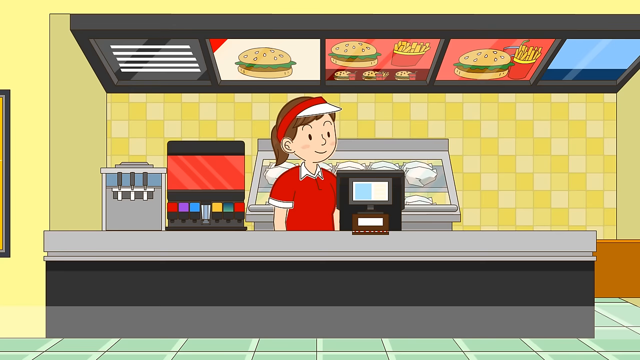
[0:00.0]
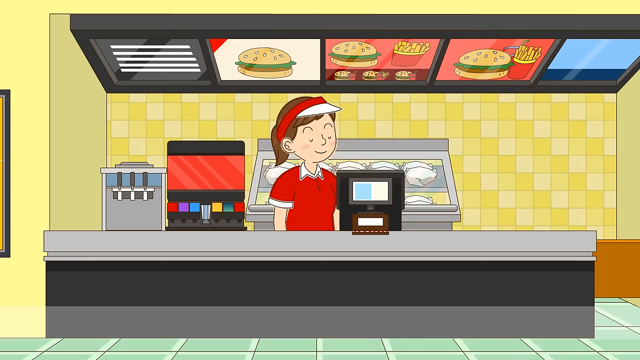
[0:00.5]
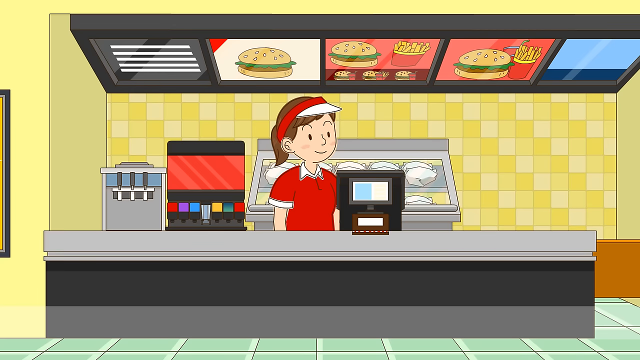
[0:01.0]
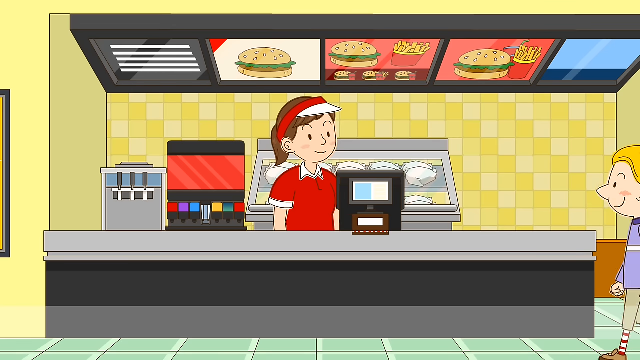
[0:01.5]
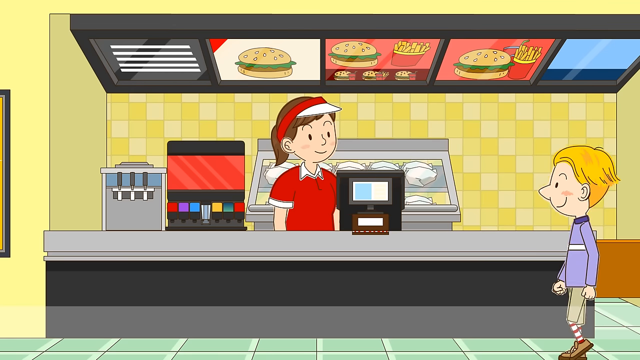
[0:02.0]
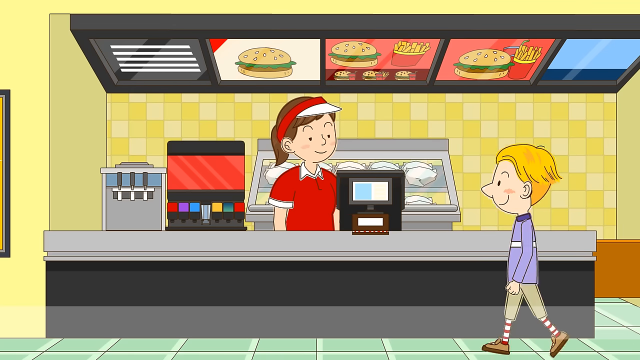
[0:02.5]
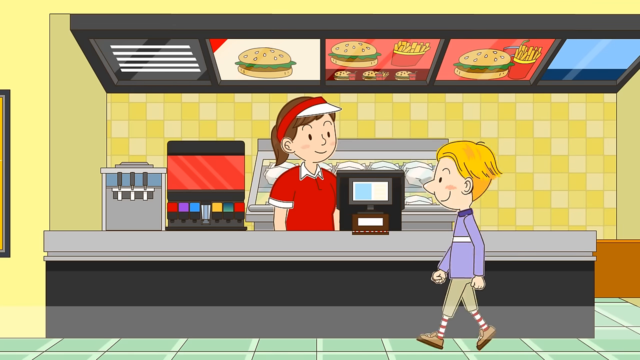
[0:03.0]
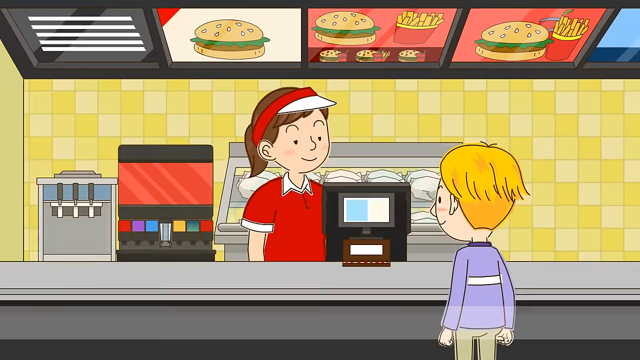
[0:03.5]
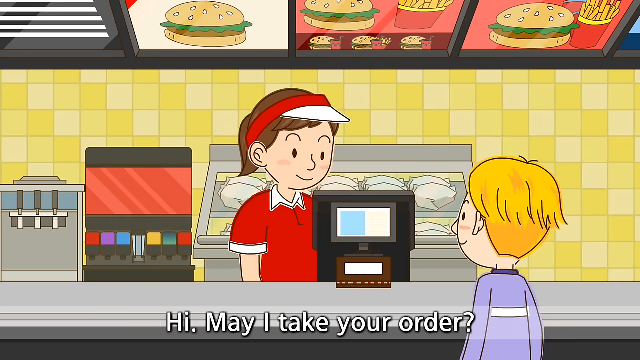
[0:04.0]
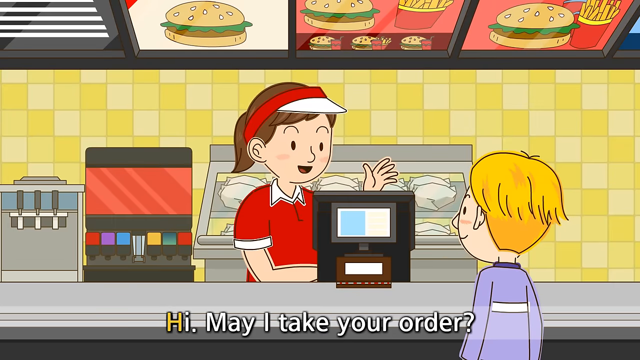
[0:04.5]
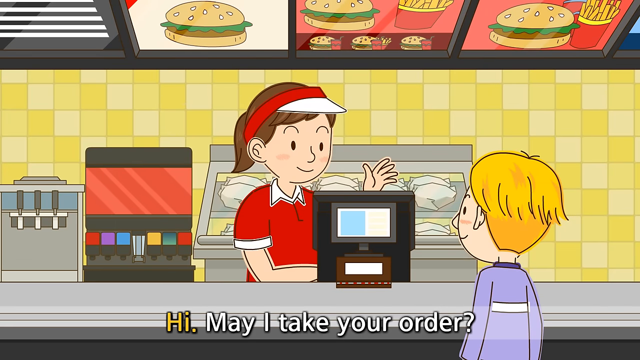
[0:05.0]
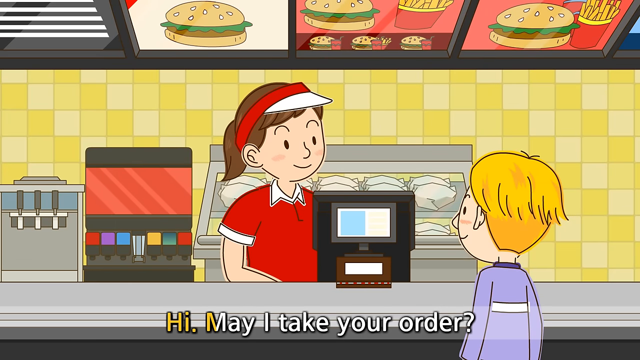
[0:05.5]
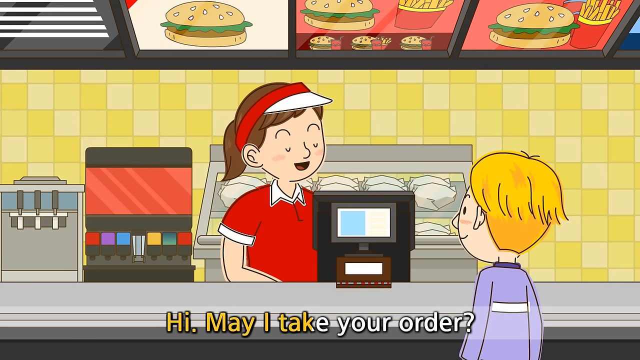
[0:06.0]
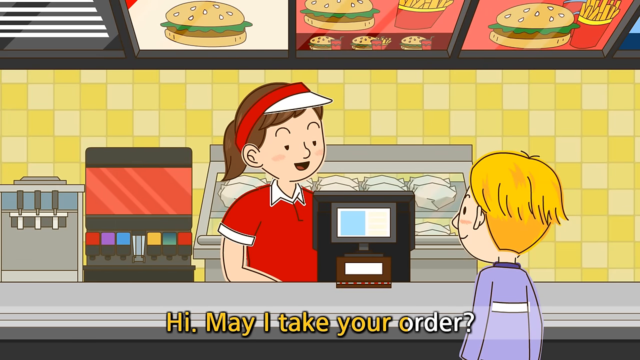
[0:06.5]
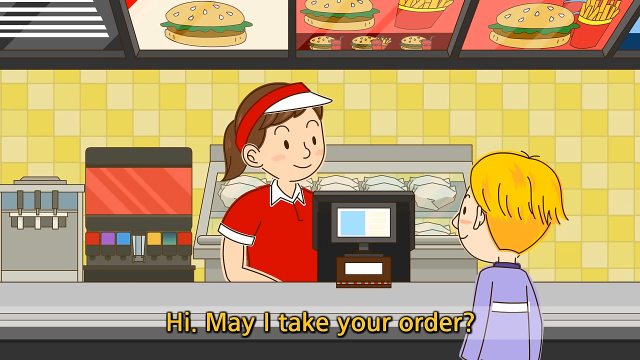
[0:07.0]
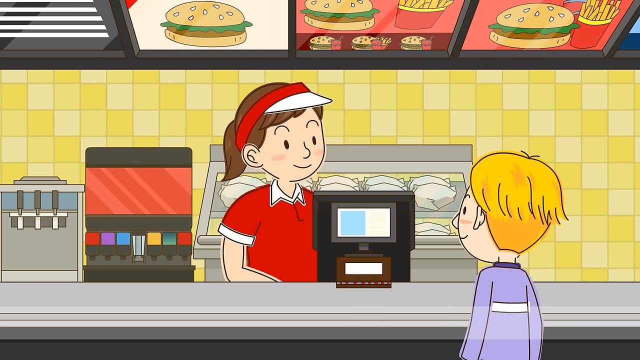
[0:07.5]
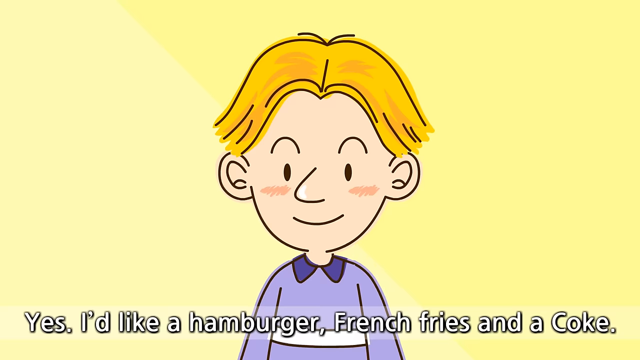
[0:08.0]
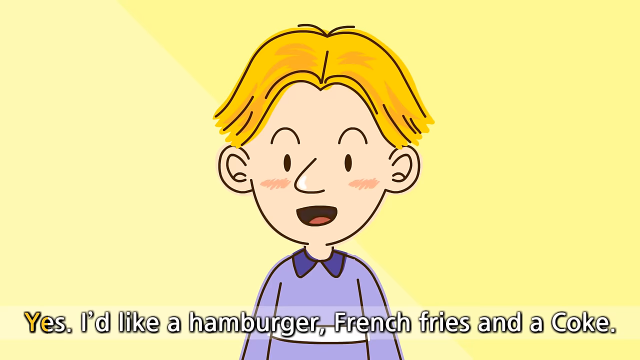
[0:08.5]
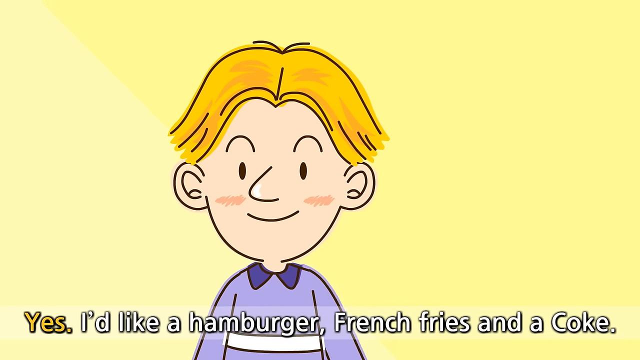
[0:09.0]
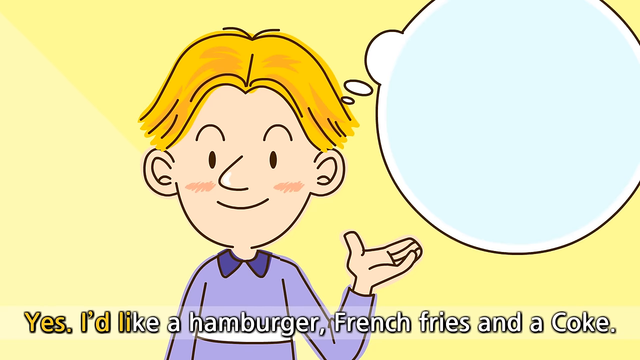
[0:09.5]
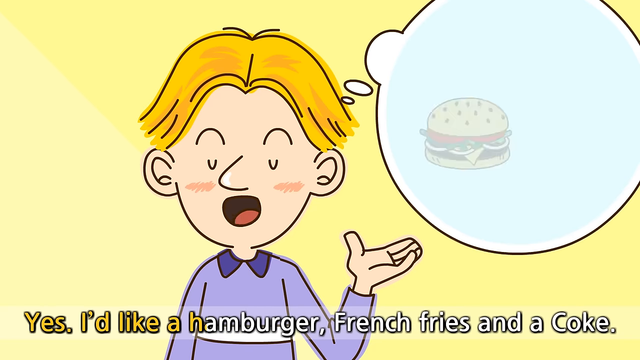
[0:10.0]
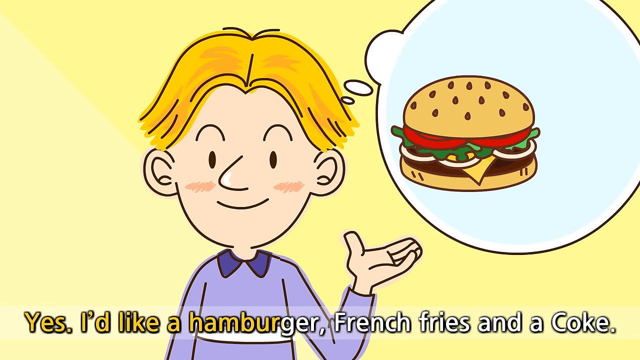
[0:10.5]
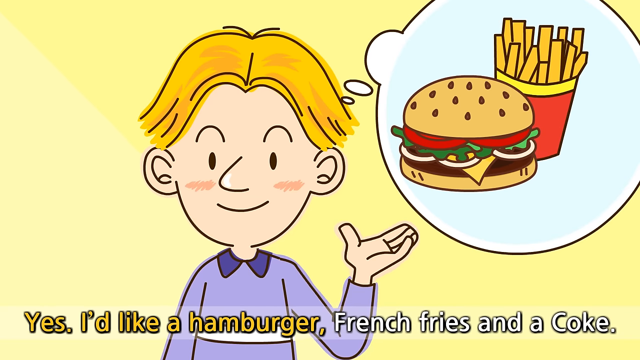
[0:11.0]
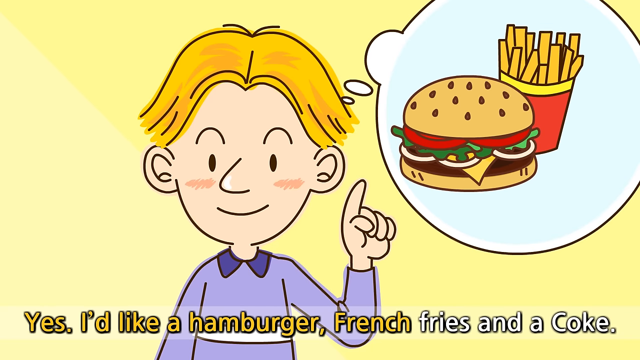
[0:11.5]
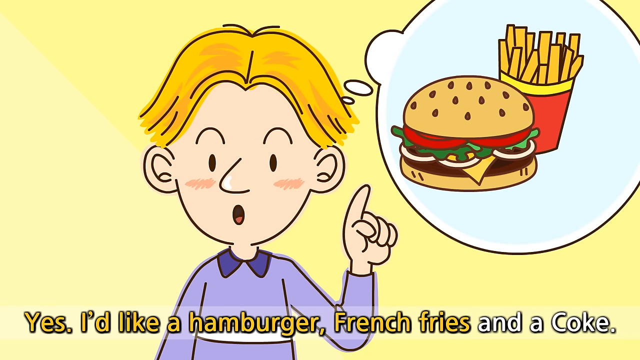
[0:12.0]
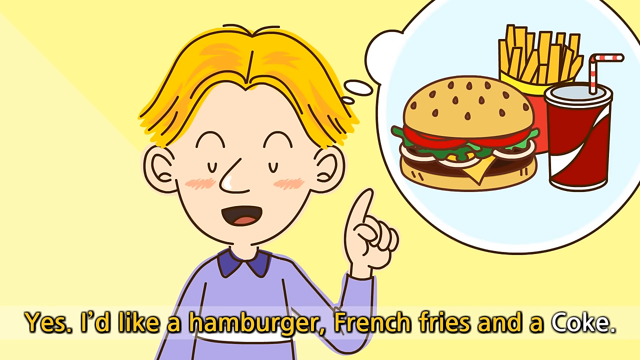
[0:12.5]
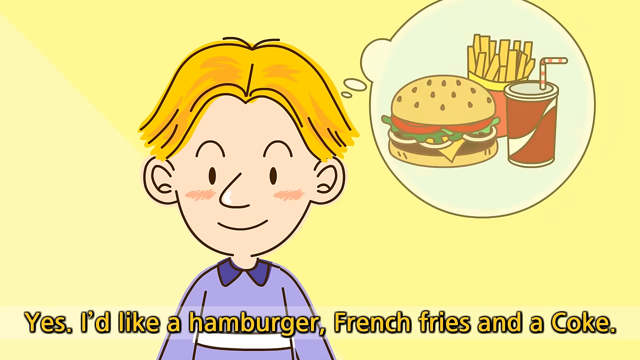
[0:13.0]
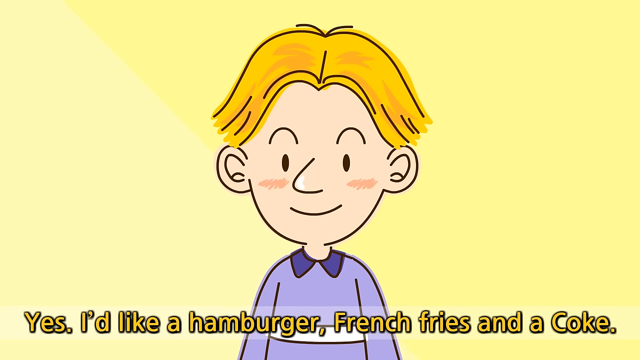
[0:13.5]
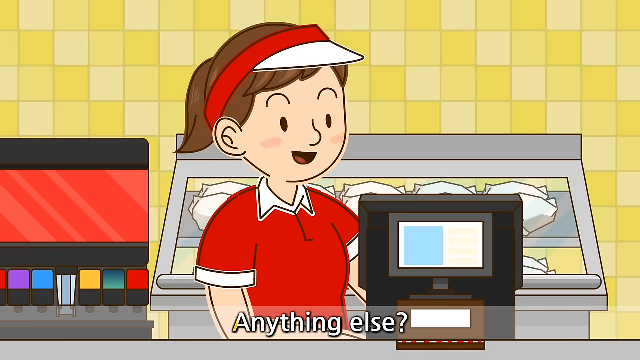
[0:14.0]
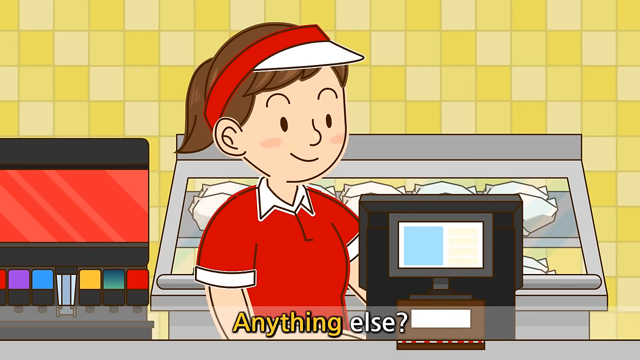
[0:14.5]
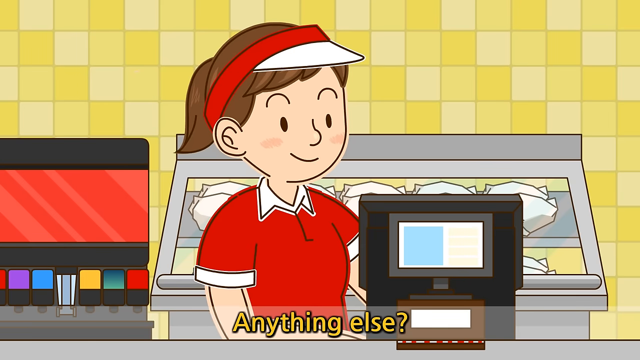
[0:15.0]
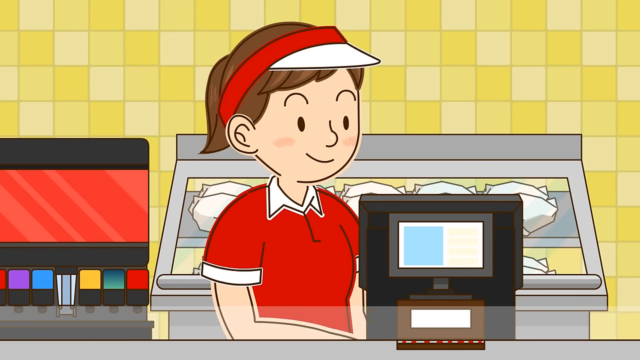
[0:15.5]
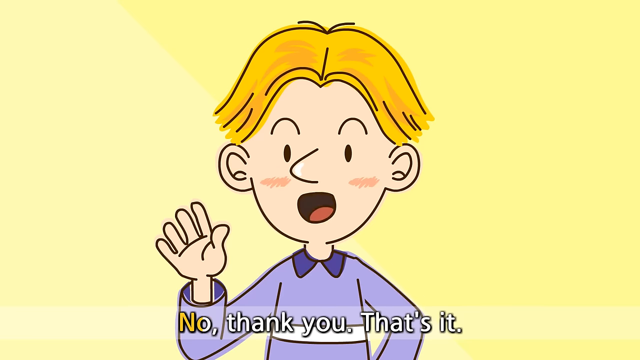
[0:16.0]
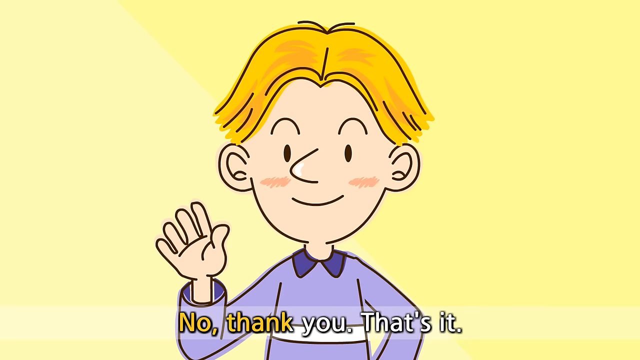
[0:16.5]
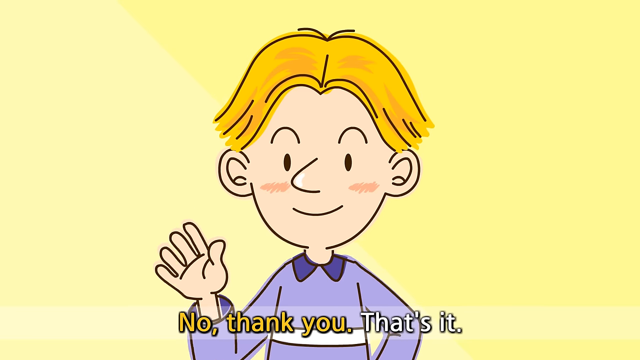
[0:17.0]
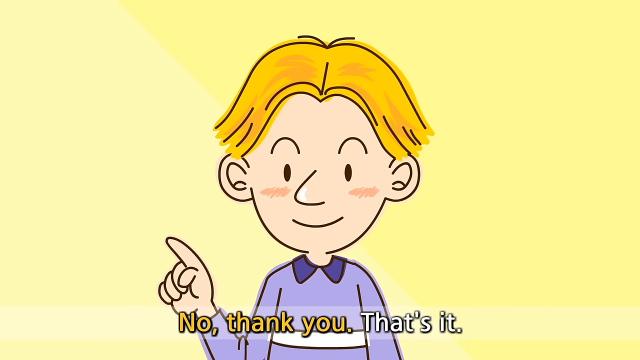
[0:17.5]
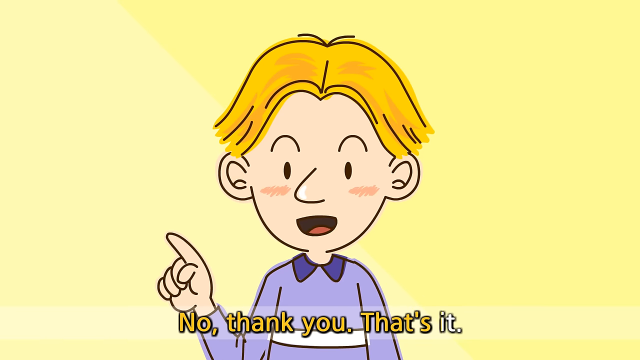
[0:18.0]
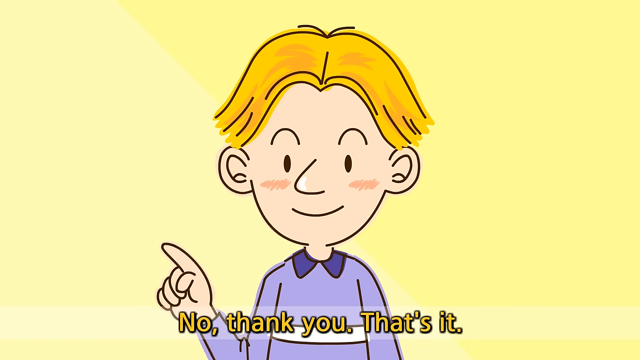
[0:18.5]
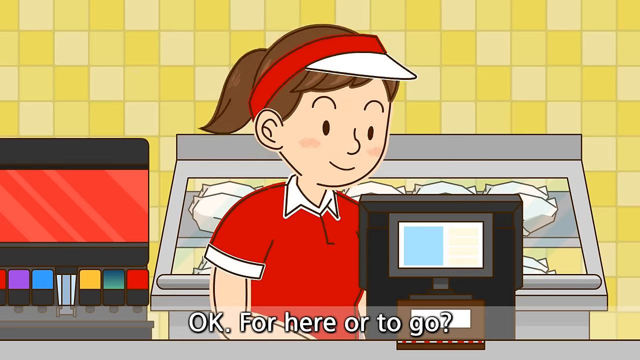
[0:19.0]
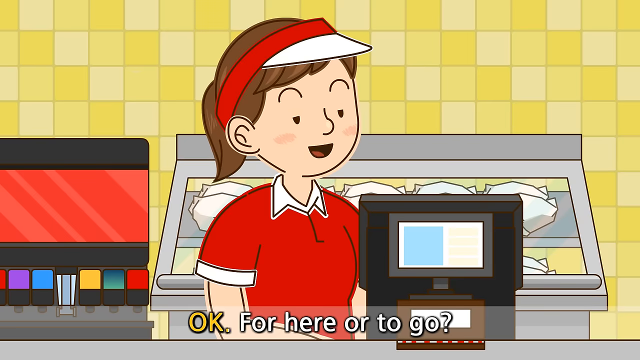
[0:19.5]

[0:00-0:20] In a cartoon animation, a character stands behind a cash register at a restaurant, taking an order. The cashier is a girl, and she says, "Hi. May I take your order?" The customer, a boy with blonde hair parted down the middle, says he wants a hamburger, french fries and a coke. When she asks if he wants anything else, he says, "No, thank you. That's it," and she asks whether it is for here or to go. She wears a red shirt with a white collar and white trim, and a headband on her head with a white visor over top of it. She is standing in the restaurant behind the counter, and signs hang above showing what can be ordered.